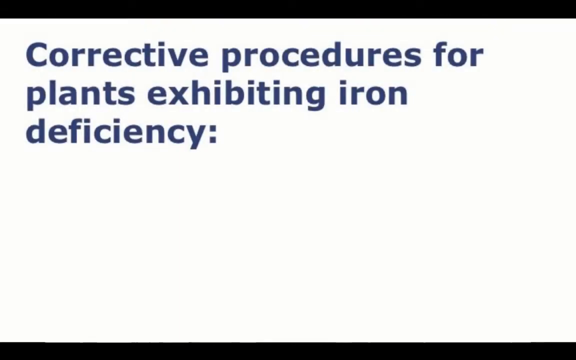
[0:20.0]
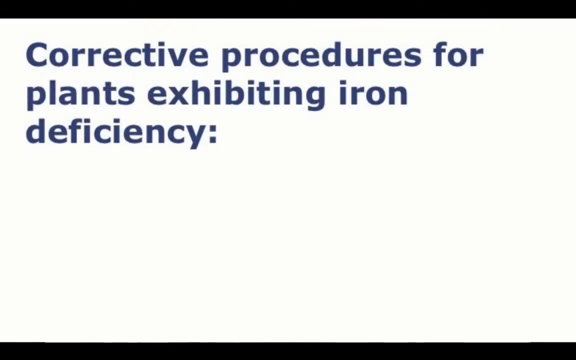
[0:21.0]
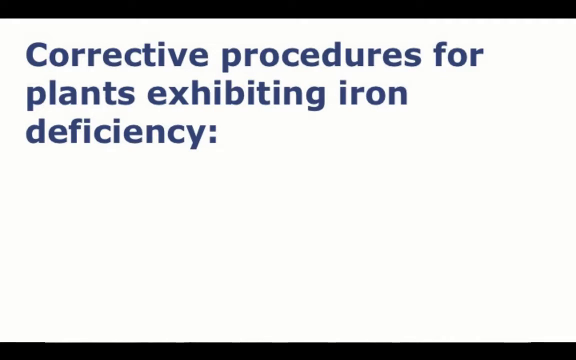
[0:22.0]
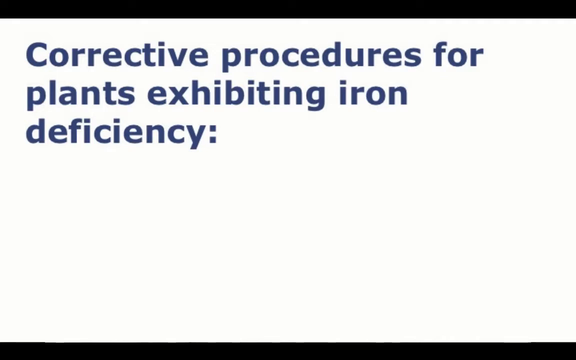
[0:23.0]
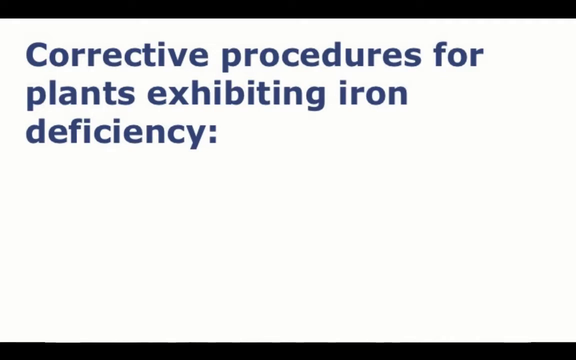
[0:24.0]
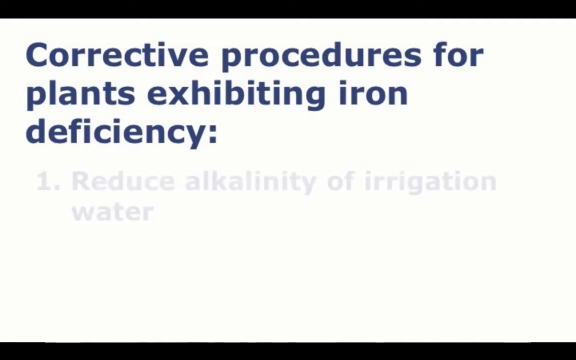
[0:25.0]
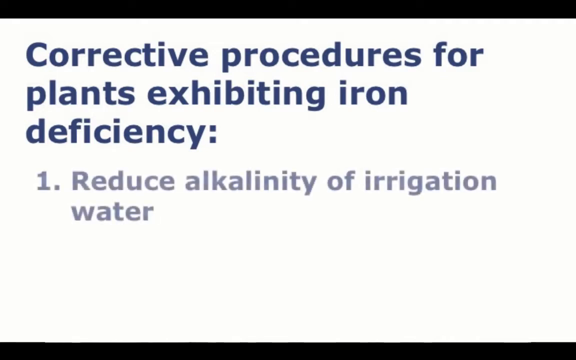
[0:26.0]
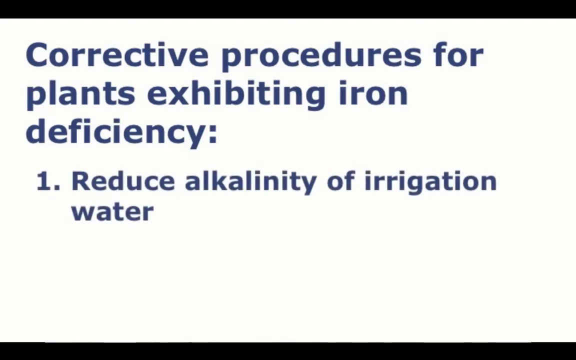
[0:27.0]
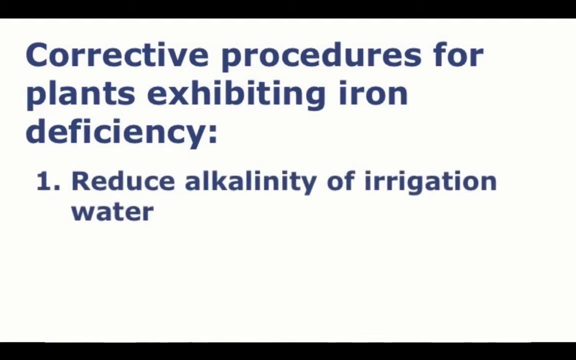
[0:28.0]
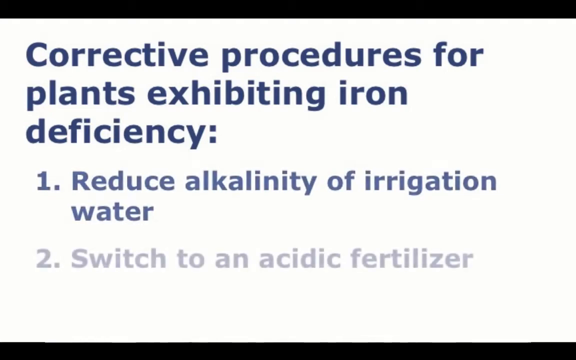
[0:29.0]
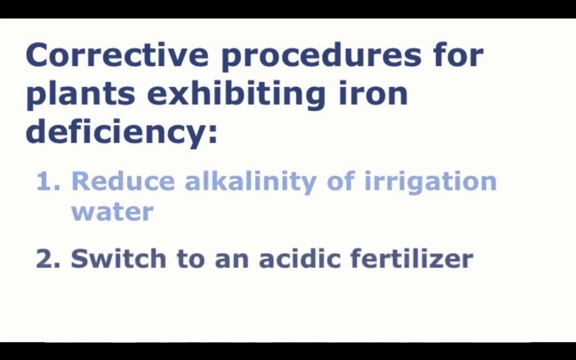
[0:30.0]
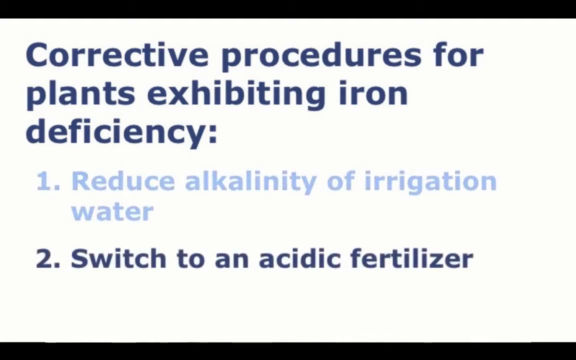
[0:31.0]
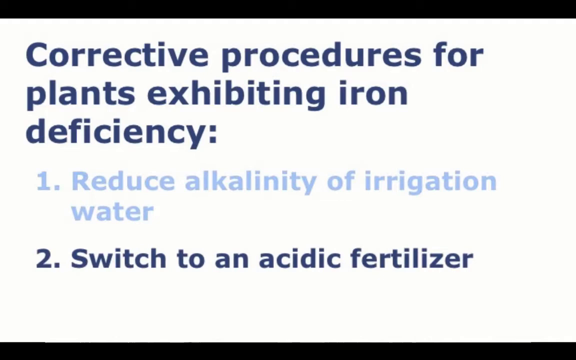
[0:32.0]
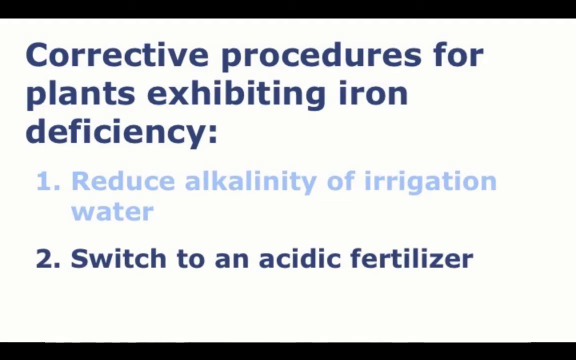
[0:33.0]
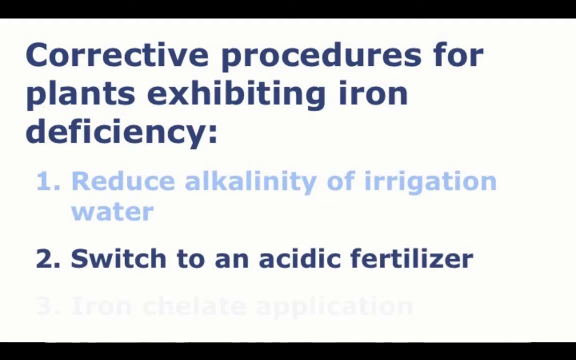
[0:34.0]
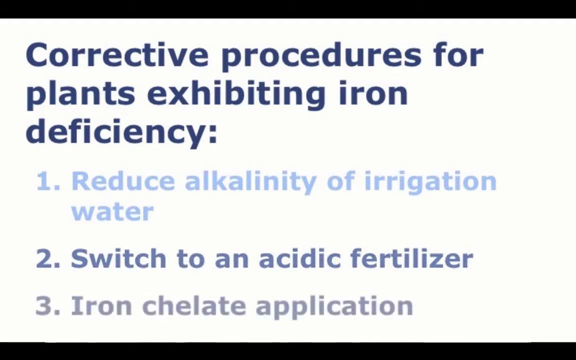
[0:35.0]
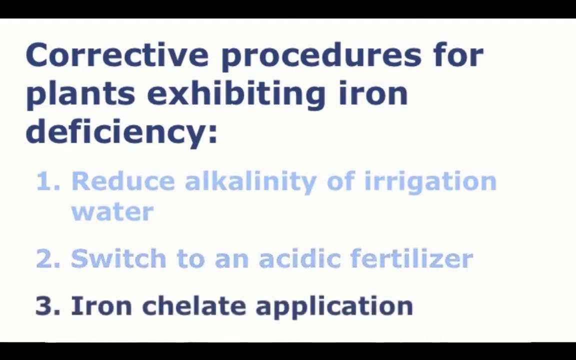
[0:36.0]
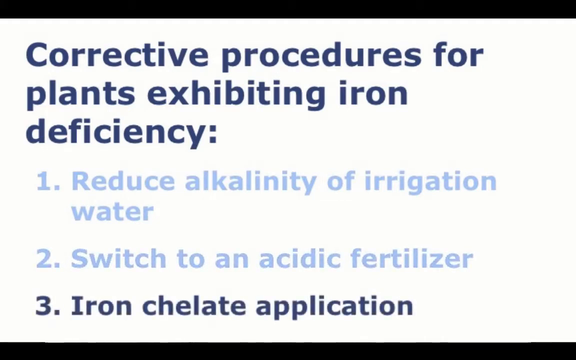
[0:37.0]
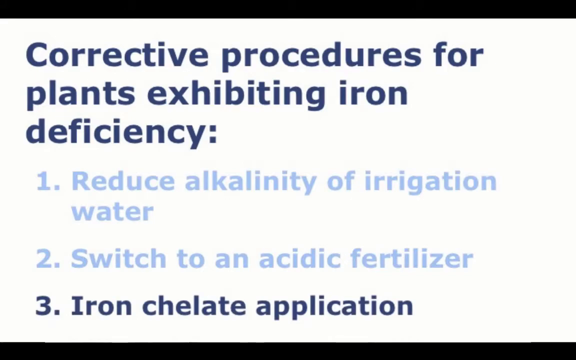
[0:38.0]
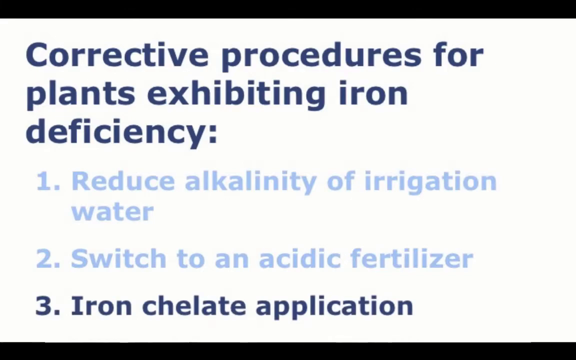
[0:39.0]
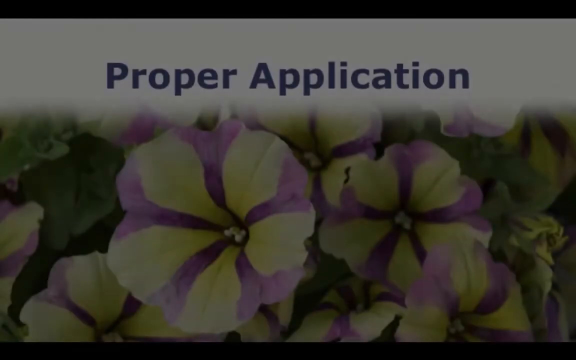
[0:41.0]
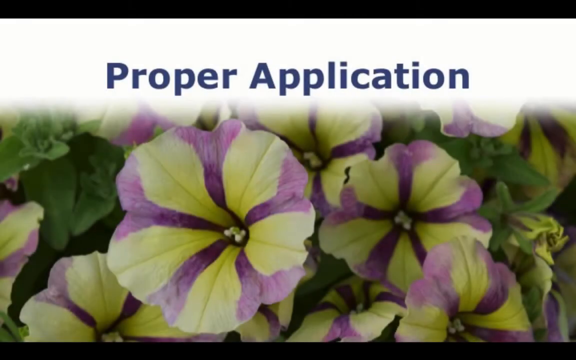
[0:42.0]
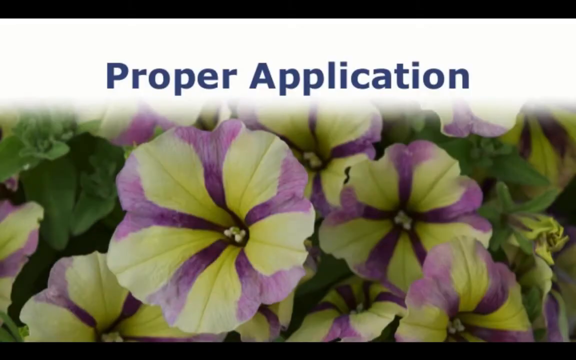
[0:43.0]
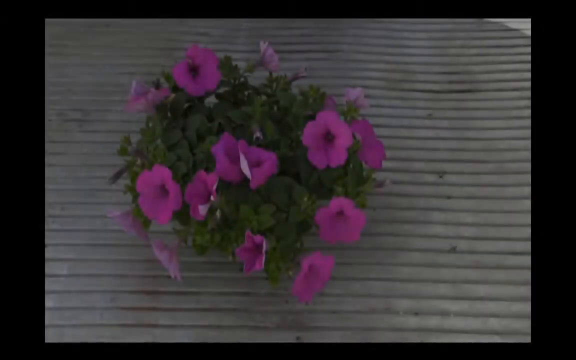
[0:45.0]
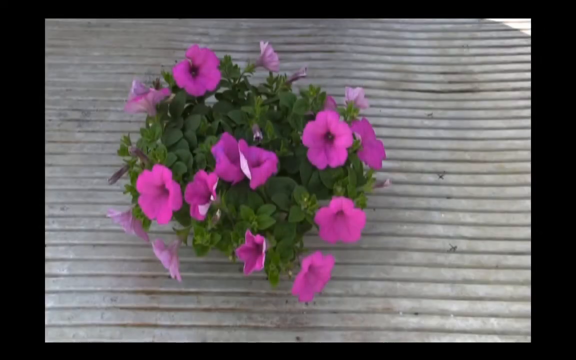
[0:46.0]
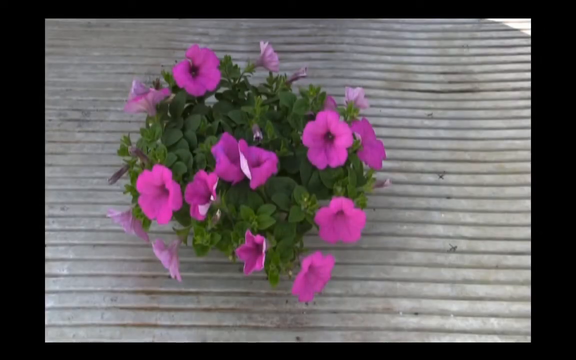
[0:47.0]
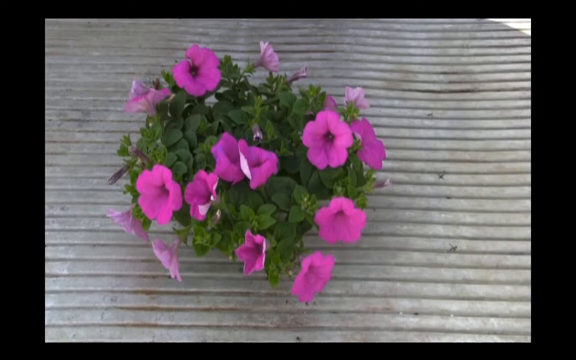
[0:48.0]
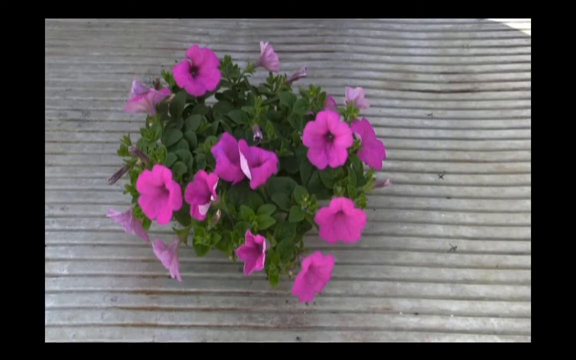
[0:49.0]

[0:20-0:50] On a white background, text appears: "Corrective procedures for plants exhibiting ion deficiency." More lines then appear one after another: "Number one. Reduce alkalinity of irrigation water," "Number two. Switch to a neutral fertilizer," and "Number three. Ion chelate application." The first two points slowly fade, and the text then says "proper application." A picture of plants with alternating colors of purple and green is shown. Next comes another plant that is green with alternating areas of purple, which looks like it has been placed on top of corrugated iron. It is a single plant, mainly green, with just a few parts that are pink and clearly distinct from the main green plant.